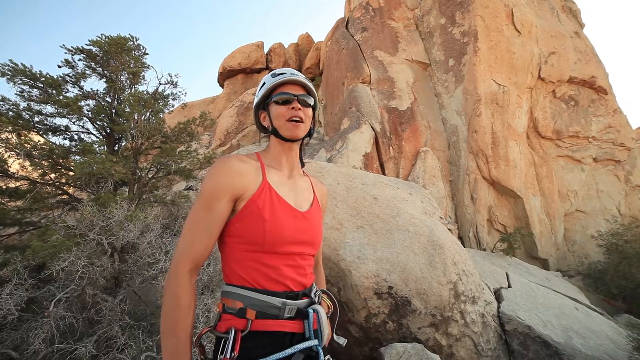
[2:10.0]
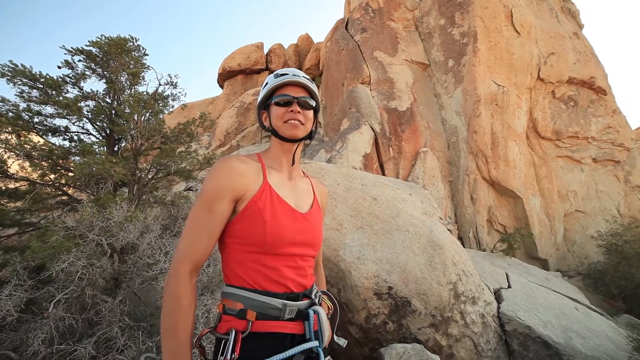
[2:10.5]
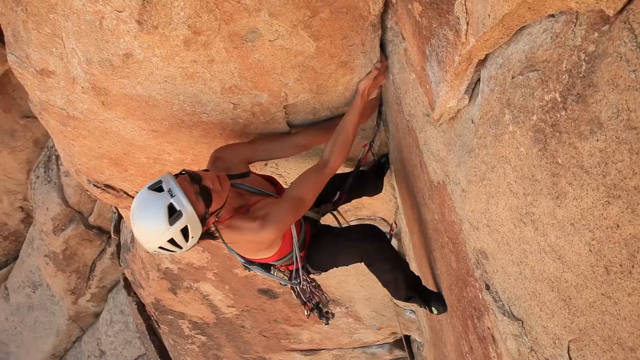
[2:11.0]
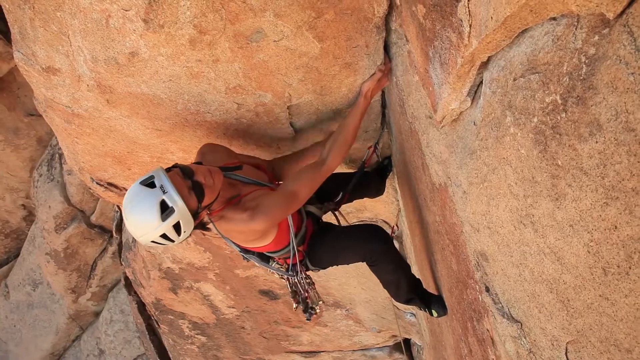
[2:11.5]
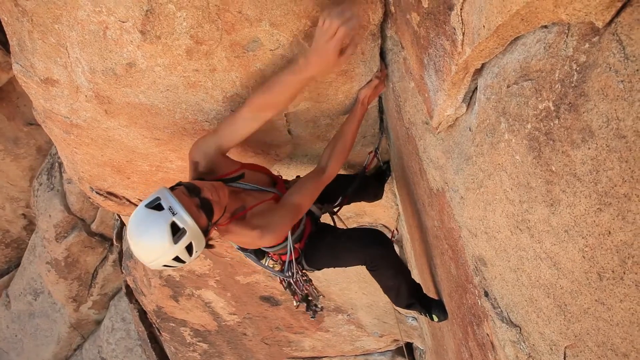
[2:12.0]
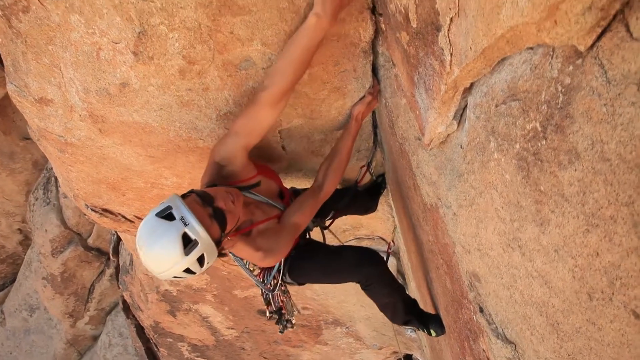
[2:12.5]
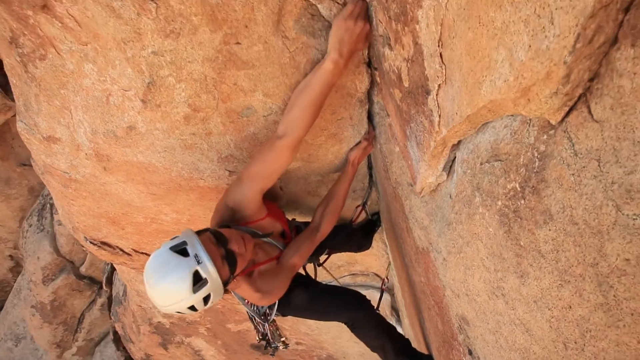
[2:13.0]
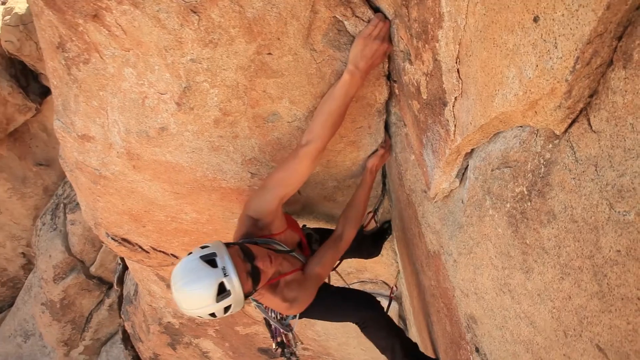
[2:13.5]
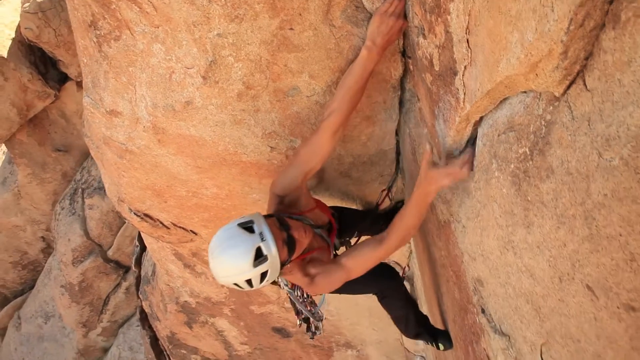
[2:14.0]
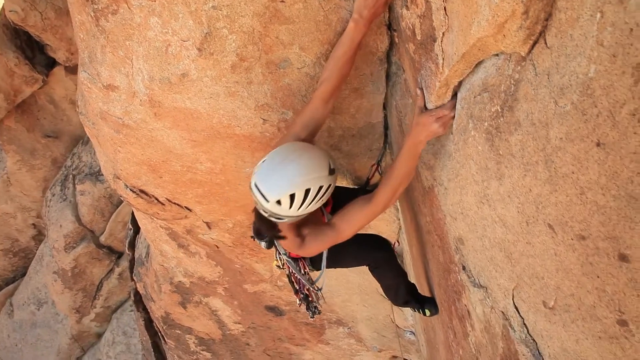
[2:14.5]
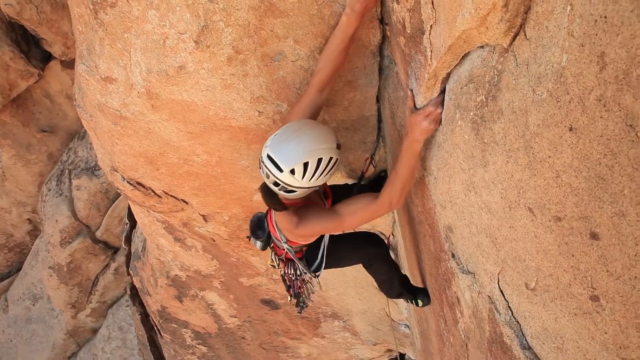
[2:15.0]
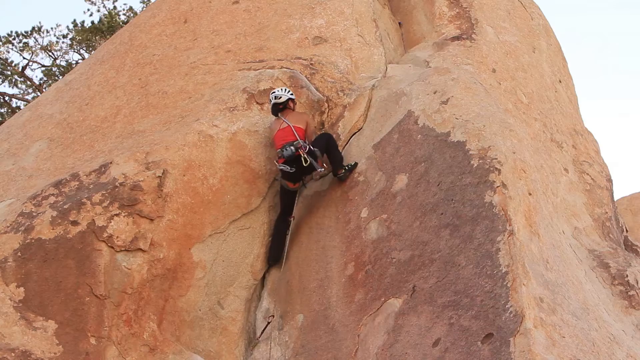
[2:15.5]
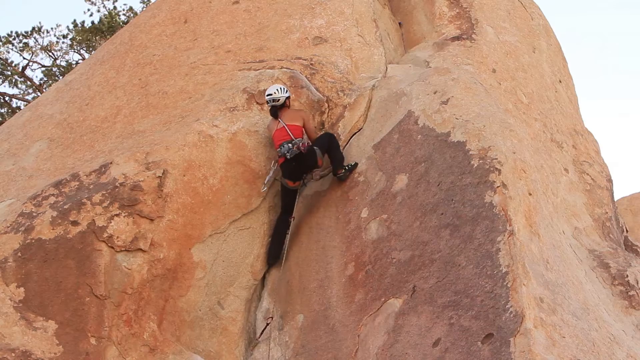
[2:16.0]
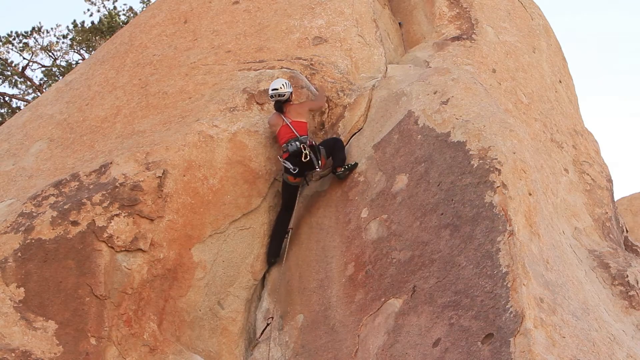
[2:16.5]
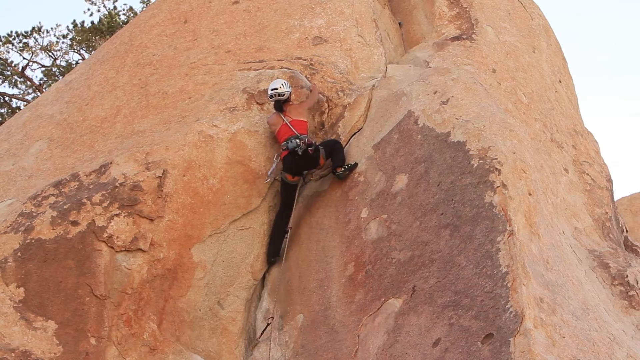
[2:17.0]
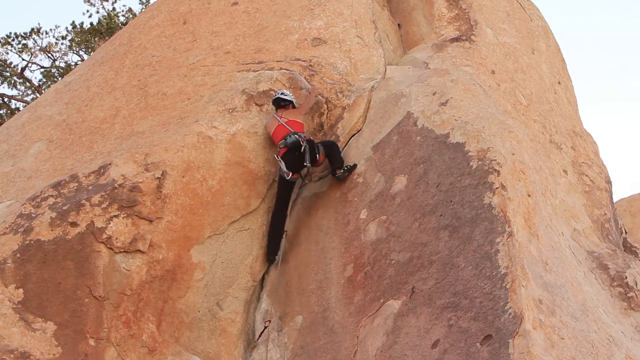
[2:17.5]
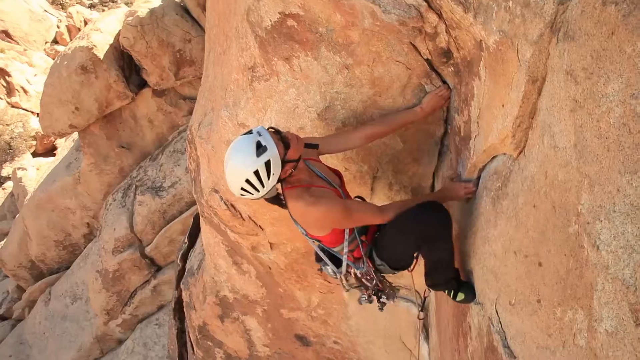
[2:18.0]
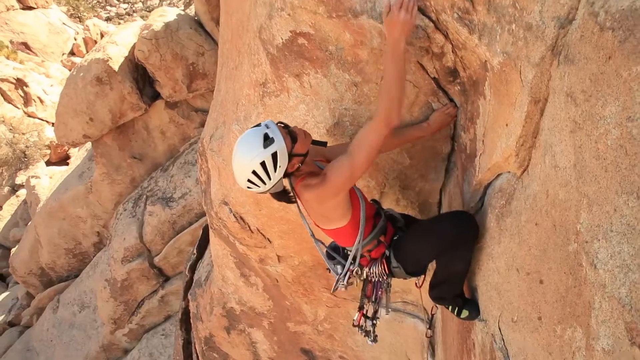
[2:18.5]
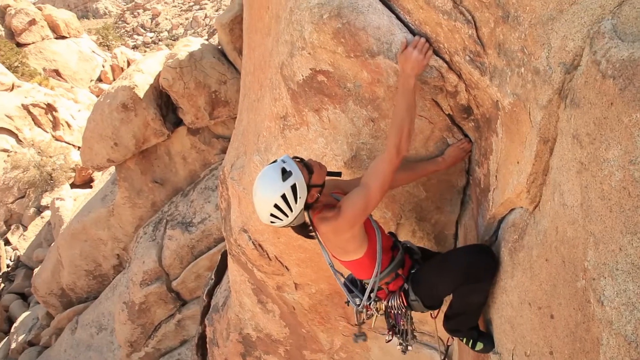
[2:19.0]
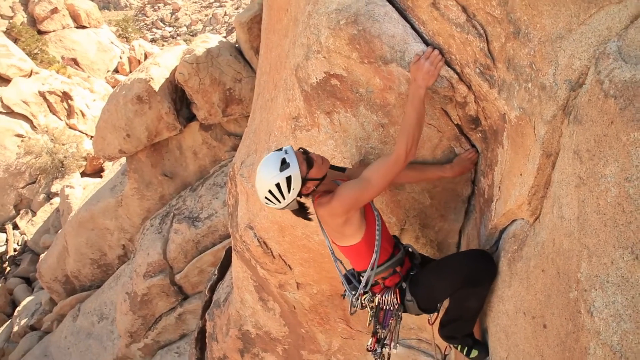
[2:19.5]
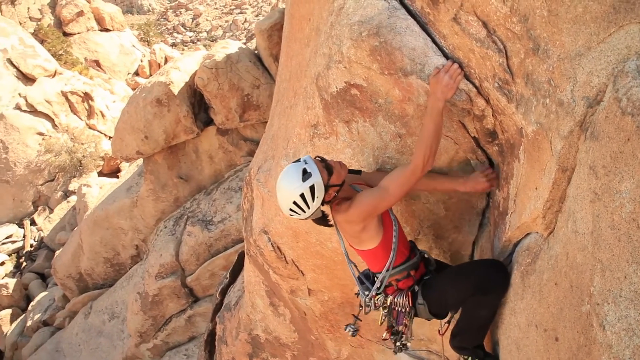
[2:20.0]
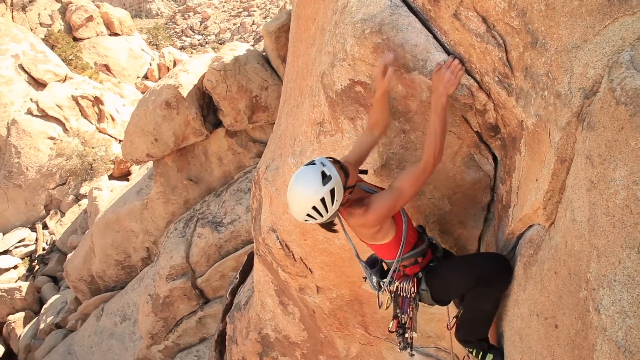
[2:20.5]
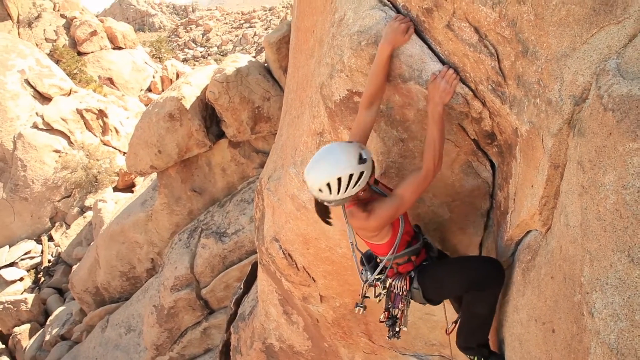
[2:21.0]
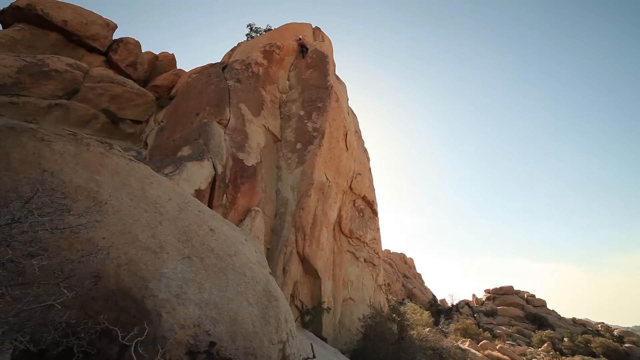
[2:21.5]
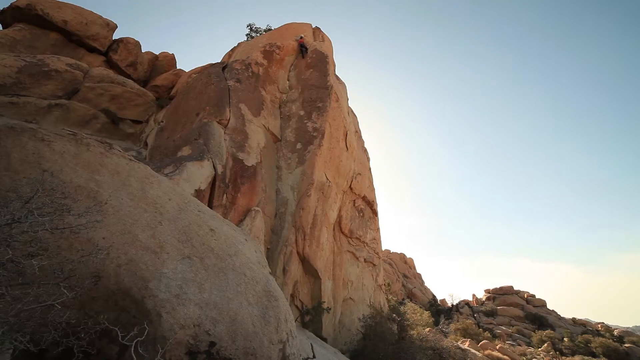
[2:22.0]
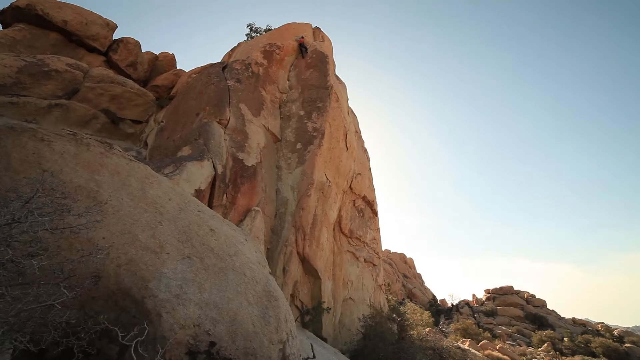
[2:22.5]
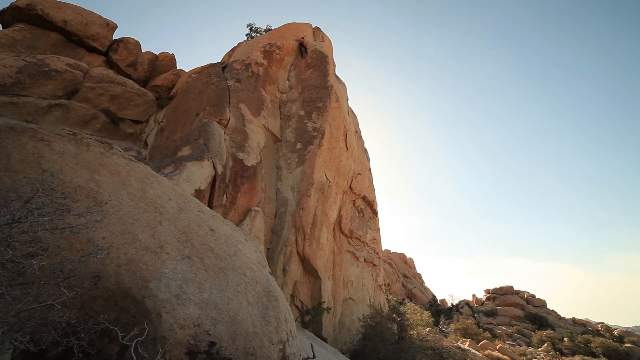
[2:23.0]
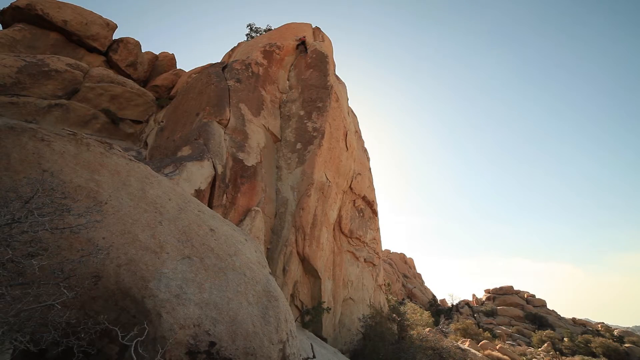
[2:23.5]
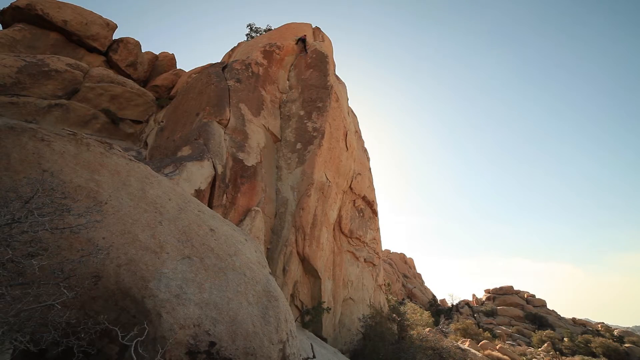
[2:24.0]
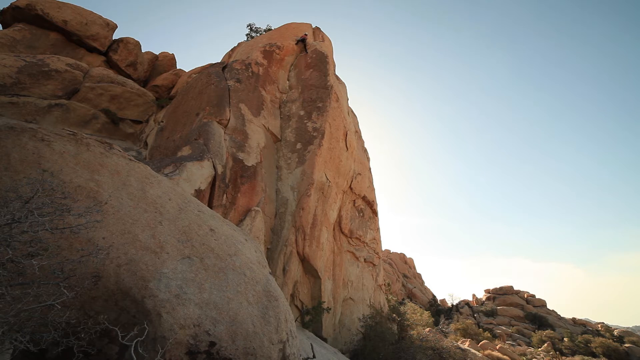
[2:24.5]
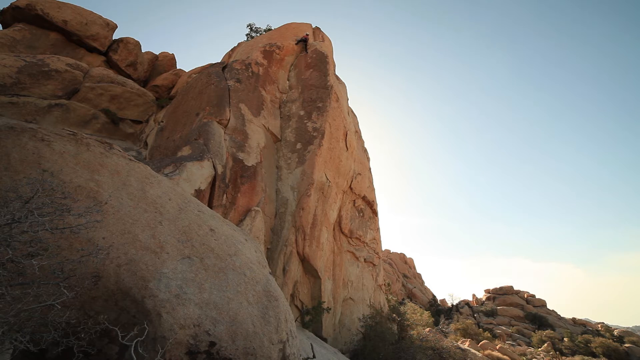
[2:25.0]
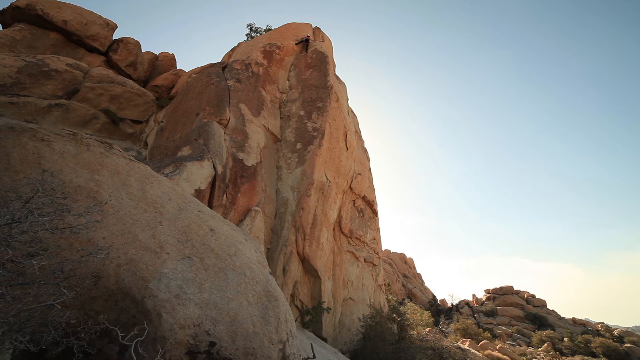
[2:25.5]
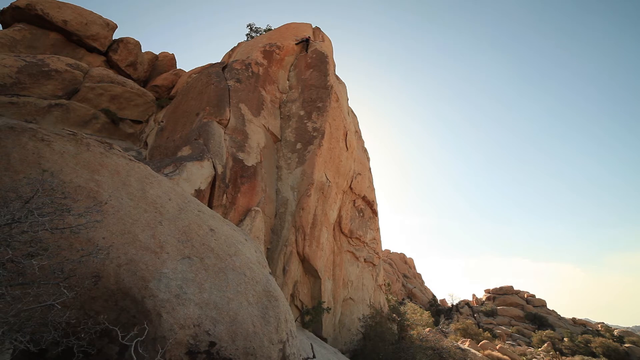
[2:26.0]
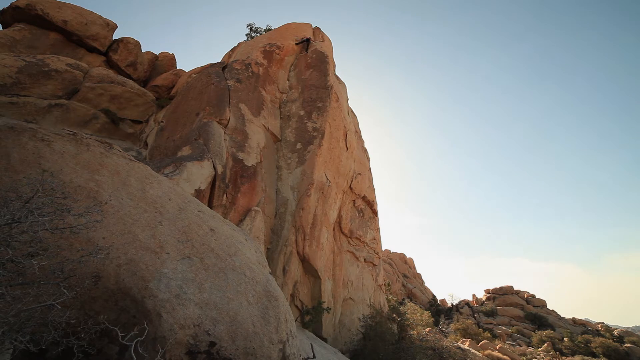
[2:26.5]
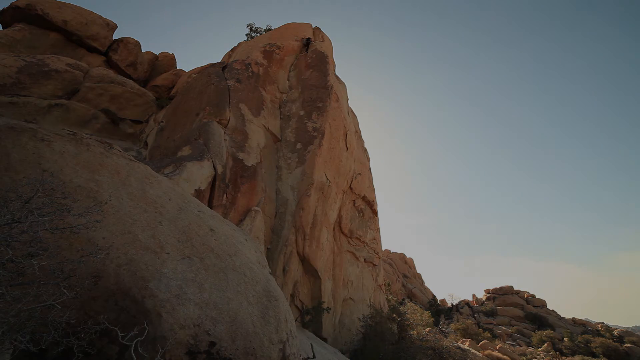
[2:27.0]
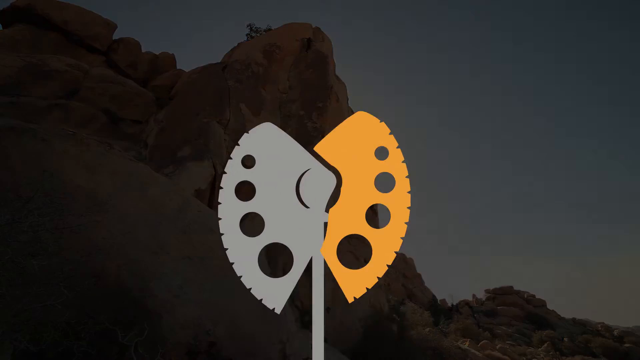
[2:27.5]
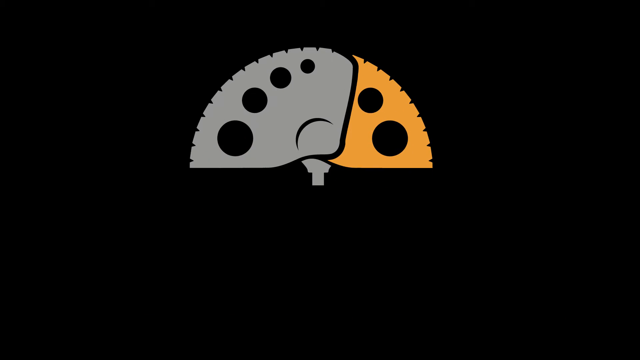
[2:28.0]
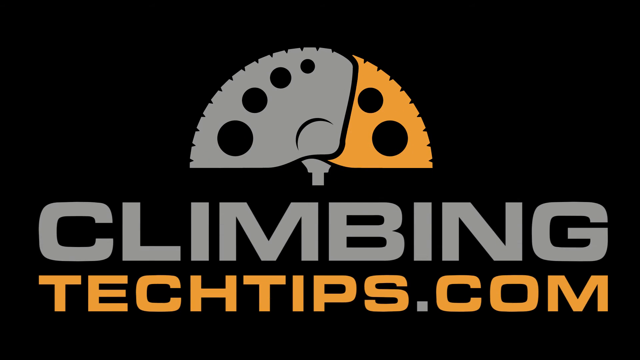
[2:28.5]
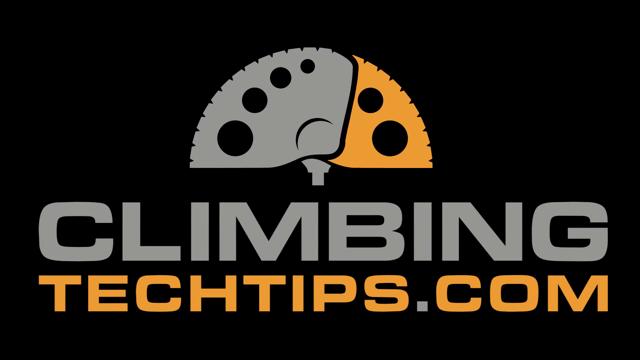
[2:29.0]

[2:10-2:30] The woman, wearing black shades, a red top, black pants and a white helmet, climbs a huge rock with trees and shrubs visible. She puts her hands in the grooves of the rock, moving slowly, and looks almost there, only a few feet from the top. She is not shown reaching the top. At the end, text reads "climbing techtips.com."